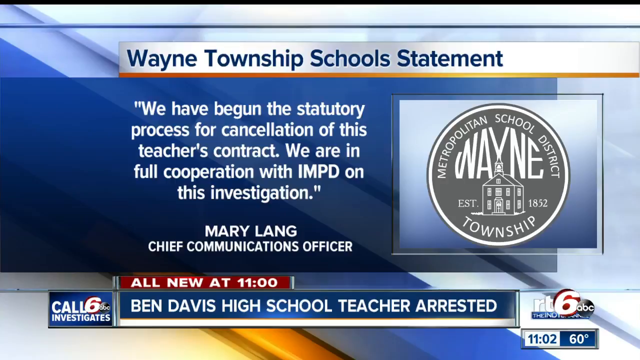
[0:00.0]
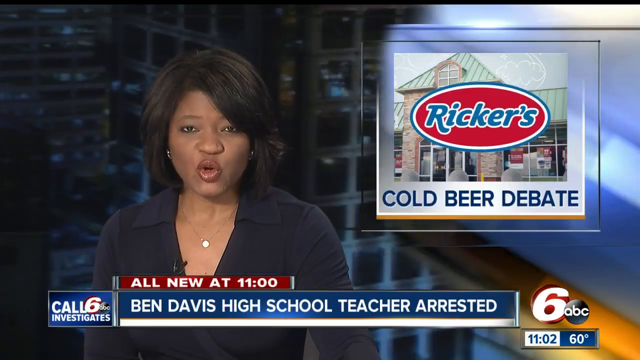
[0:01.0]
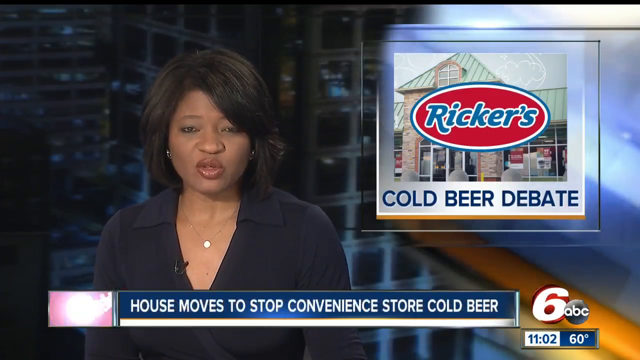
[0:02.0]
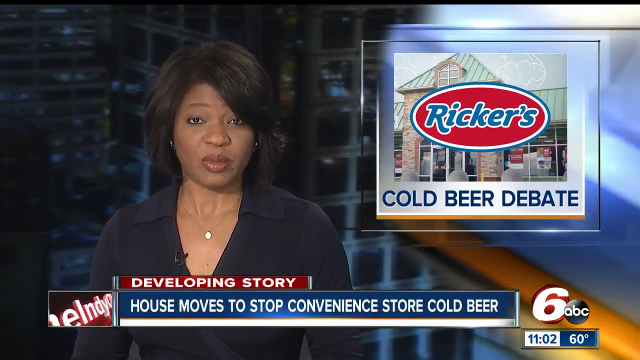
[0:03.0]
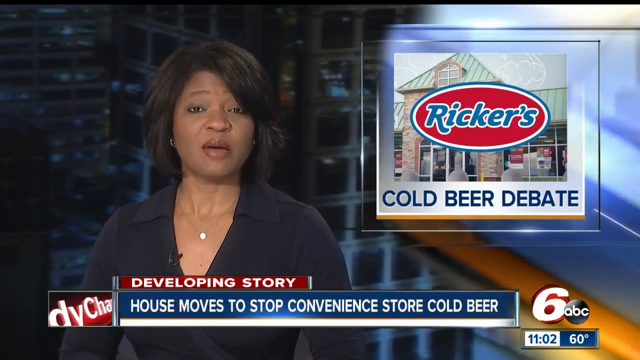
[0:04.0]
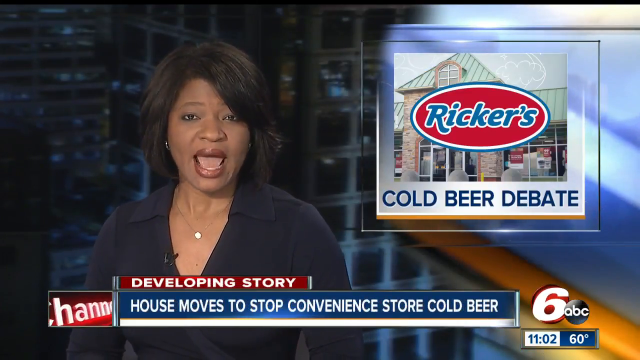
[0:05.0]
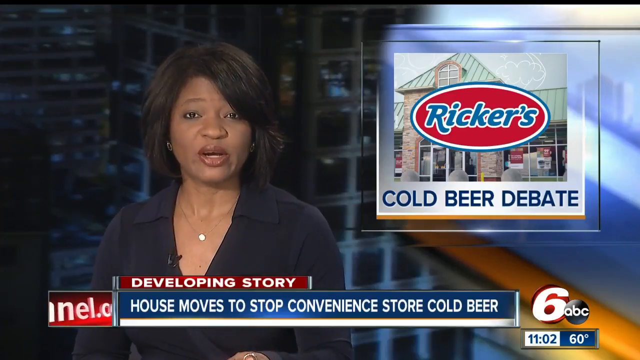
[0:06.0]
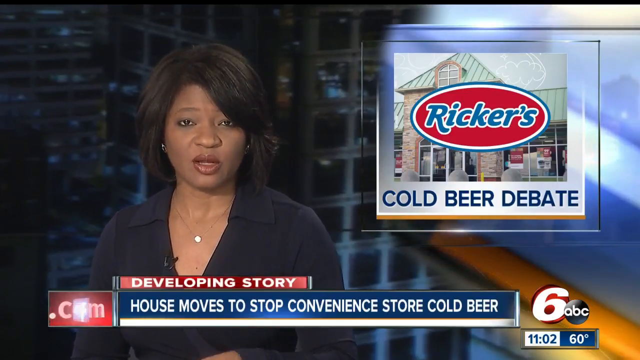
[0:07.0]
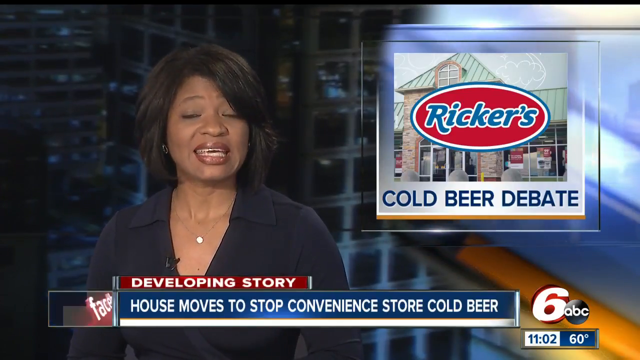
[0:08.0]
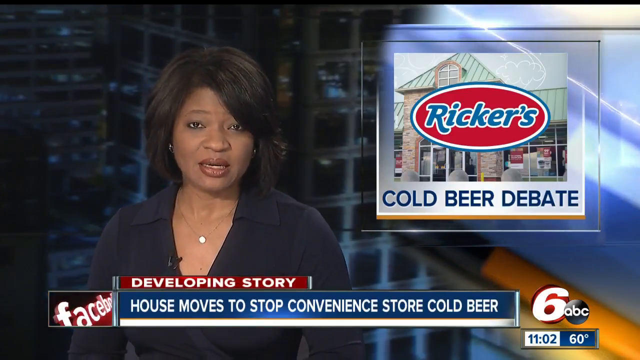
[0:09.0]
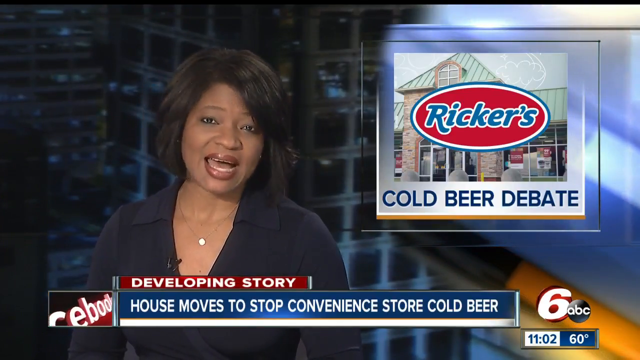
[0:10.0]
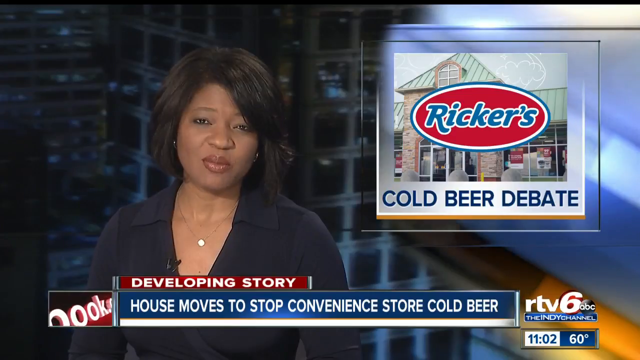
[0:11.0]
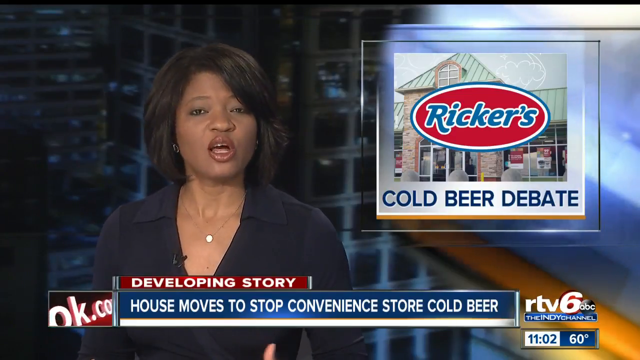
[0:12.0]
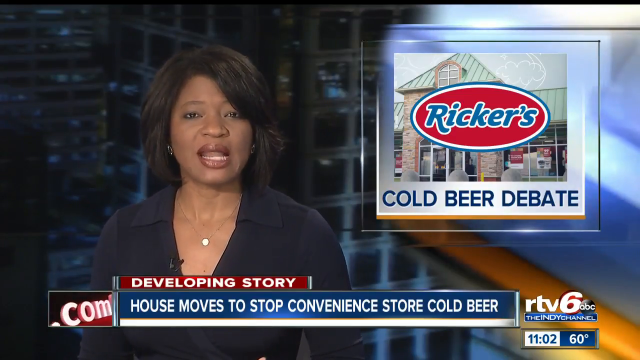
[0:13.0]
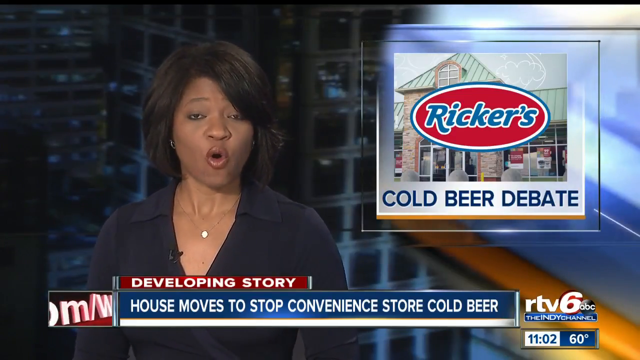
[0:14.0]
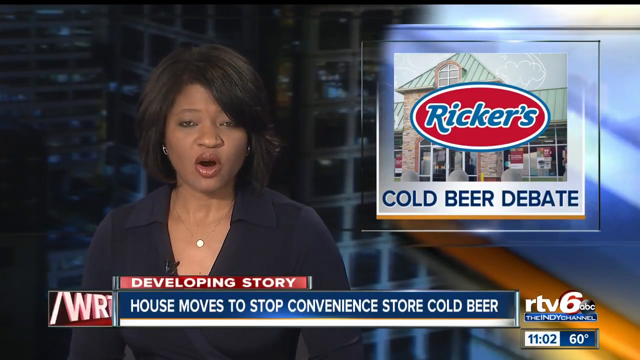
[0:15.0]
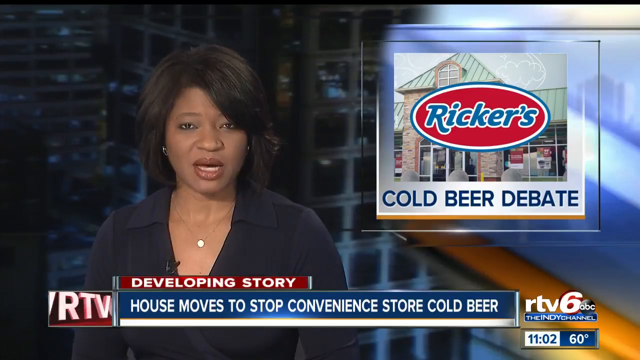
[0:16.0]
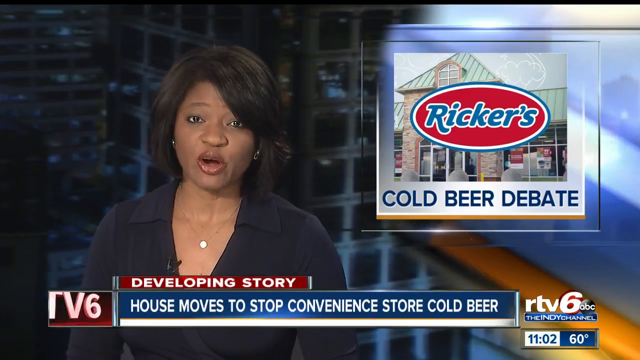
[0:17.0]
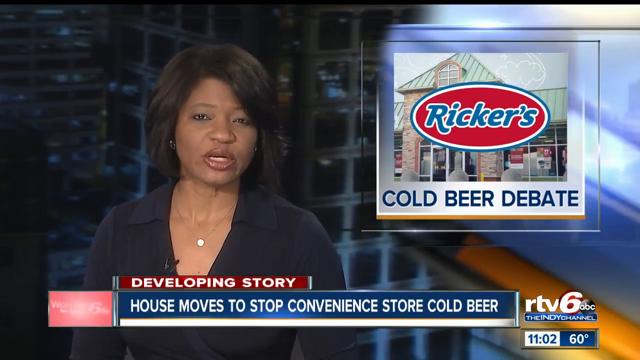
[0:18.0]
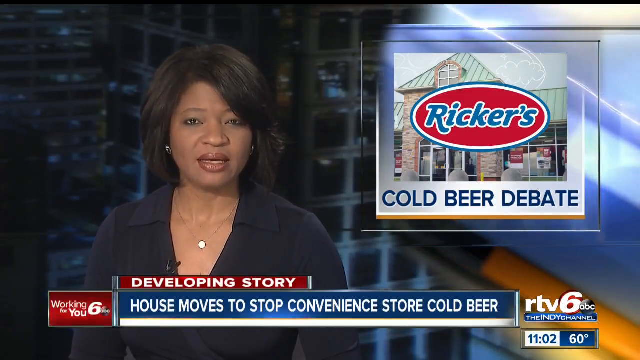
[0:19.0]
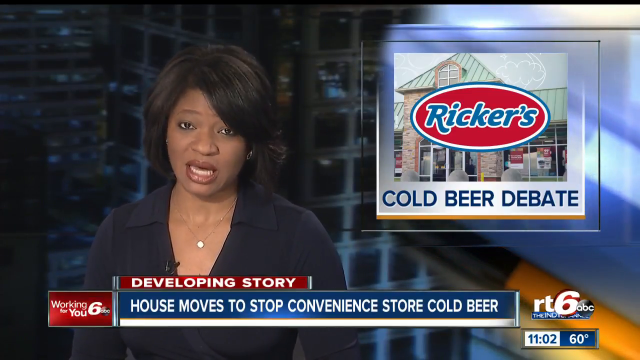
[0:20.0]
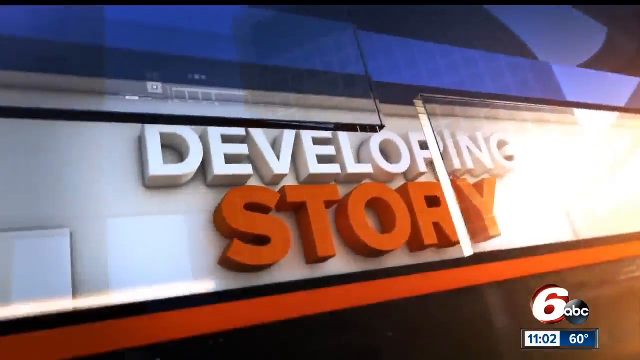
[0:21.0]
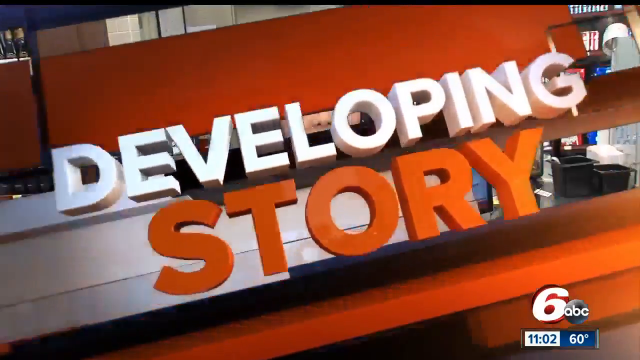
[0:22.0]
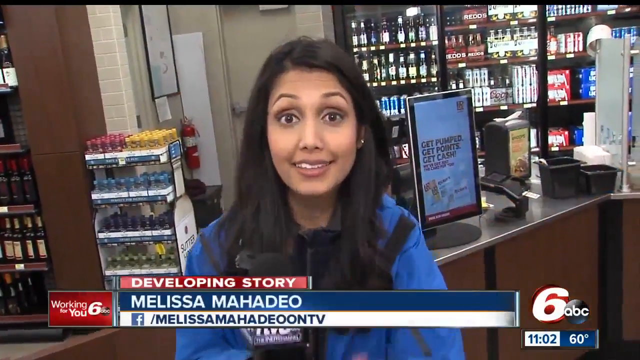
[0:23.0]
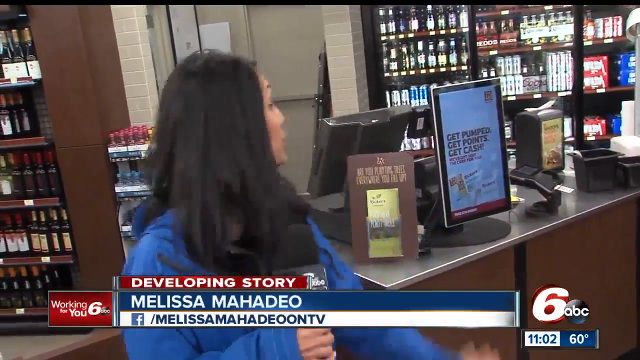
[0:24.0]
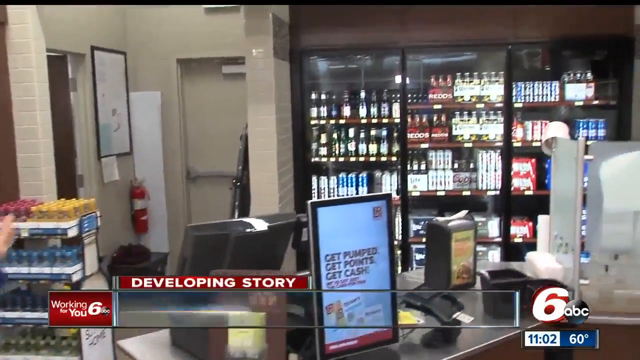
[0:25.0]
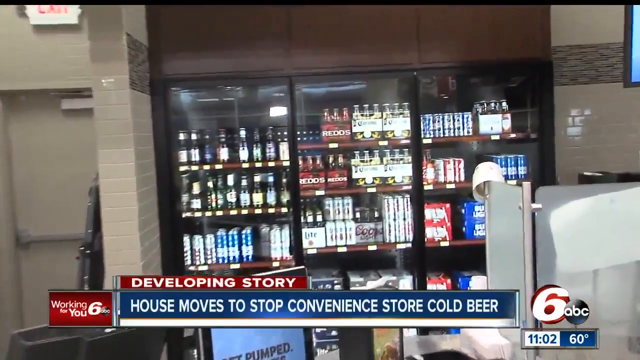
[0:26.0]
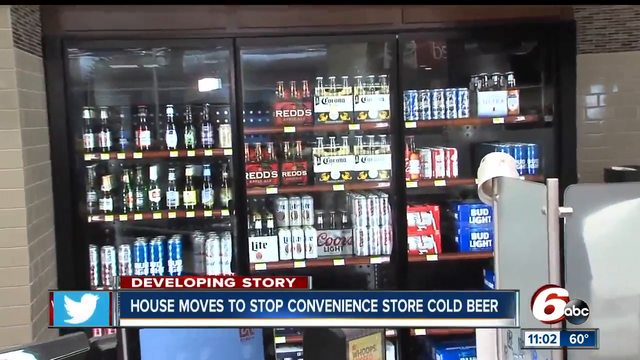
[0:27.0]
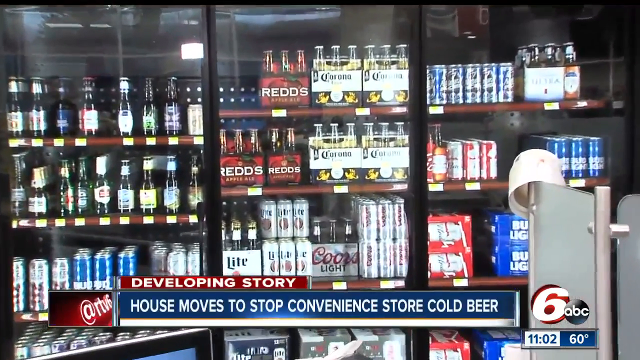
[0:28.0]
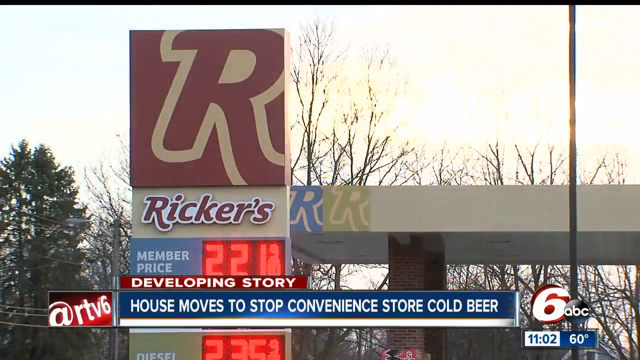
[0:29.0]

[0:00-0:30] A live podcast or news broadcast is presented by a woman with black hair who wears a blue t-shirt and a necklace. One headline reads "Ben Davis High school teacher arrested." In the top right there is a picture with text that includes "cold beer debate." Another headline reads "developing story house moves to stop convenience store cold beer." A "developing story" logo introduction follows, featuring a woman called Melissa, who wears blue and has black hair, pointing at multiple beers.